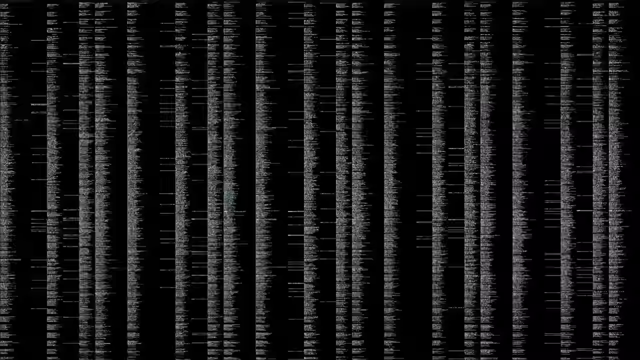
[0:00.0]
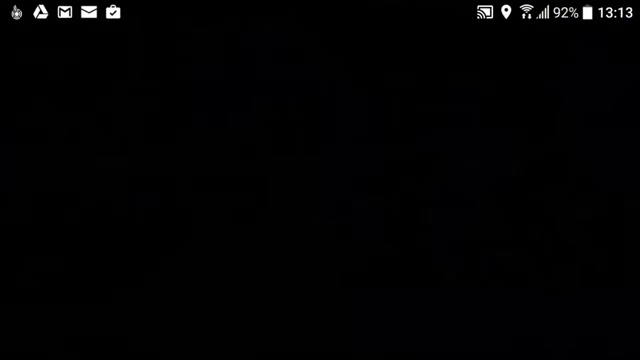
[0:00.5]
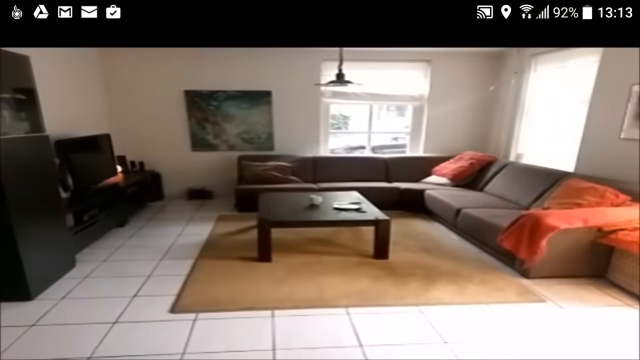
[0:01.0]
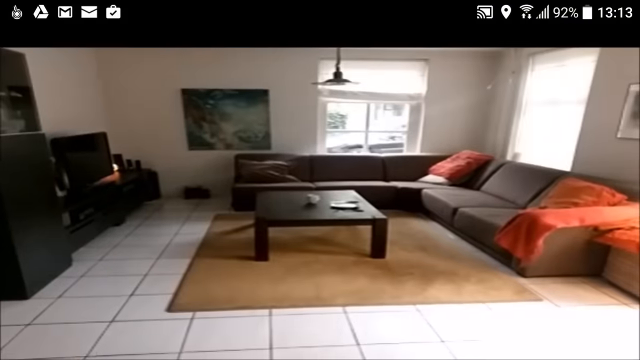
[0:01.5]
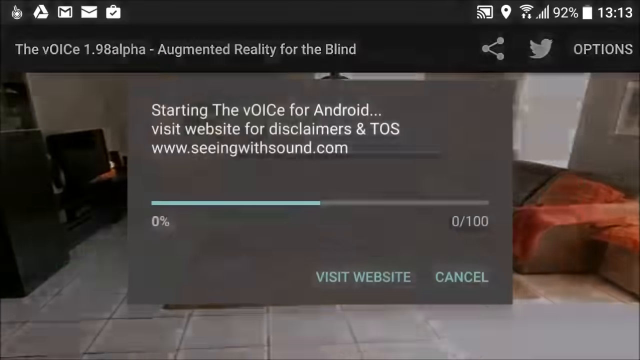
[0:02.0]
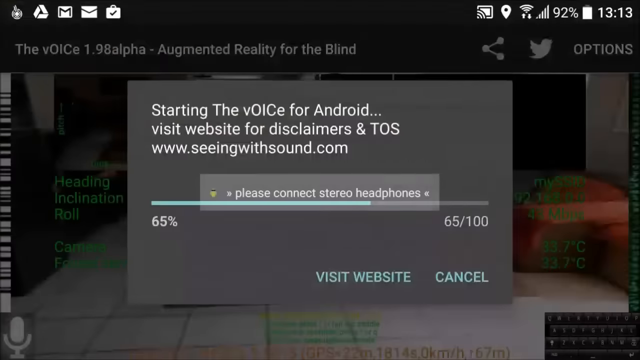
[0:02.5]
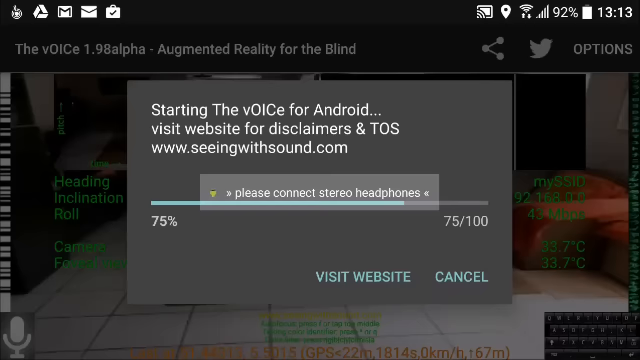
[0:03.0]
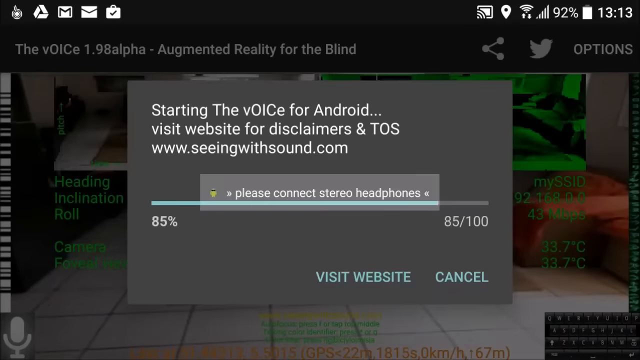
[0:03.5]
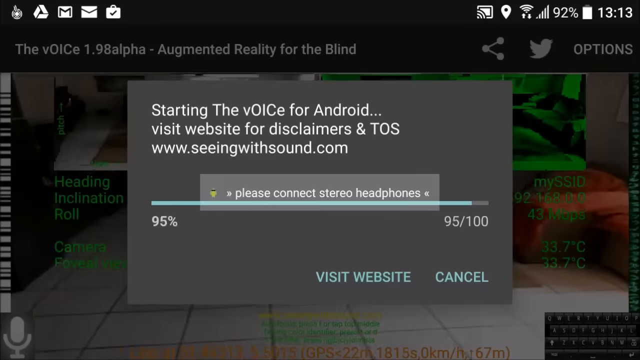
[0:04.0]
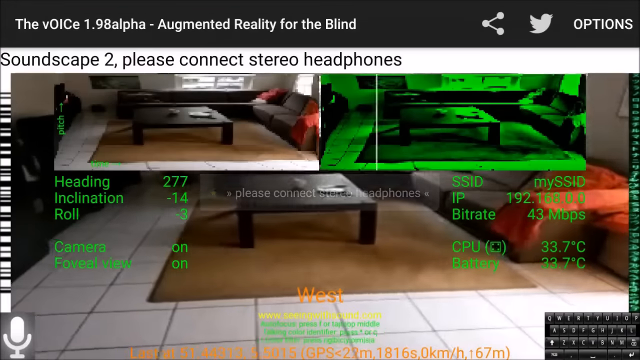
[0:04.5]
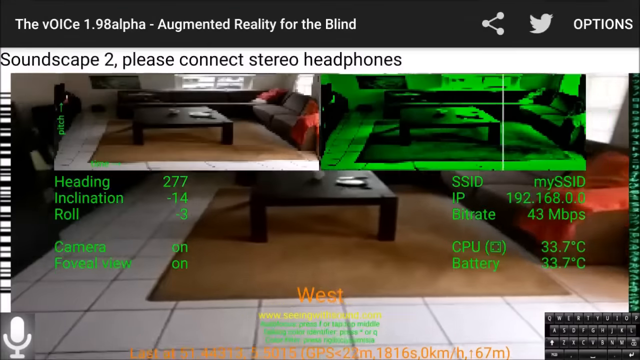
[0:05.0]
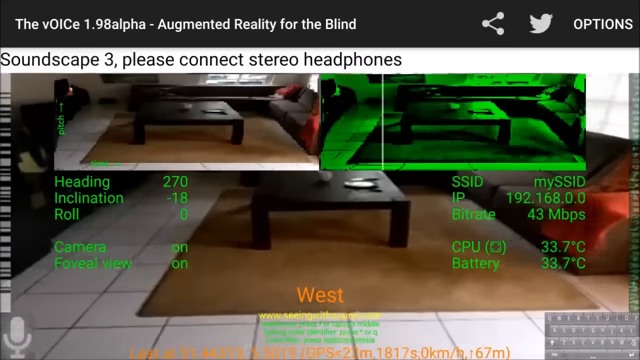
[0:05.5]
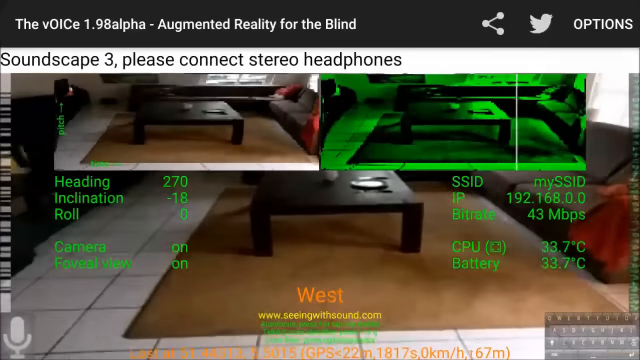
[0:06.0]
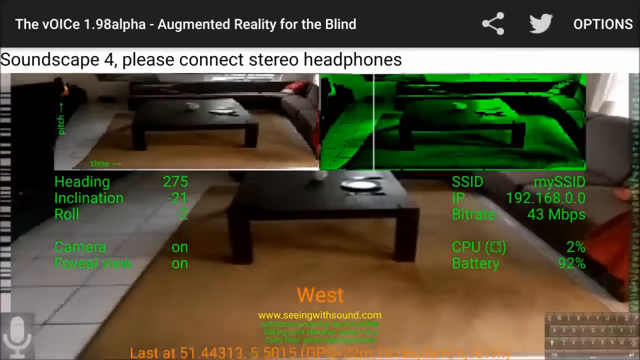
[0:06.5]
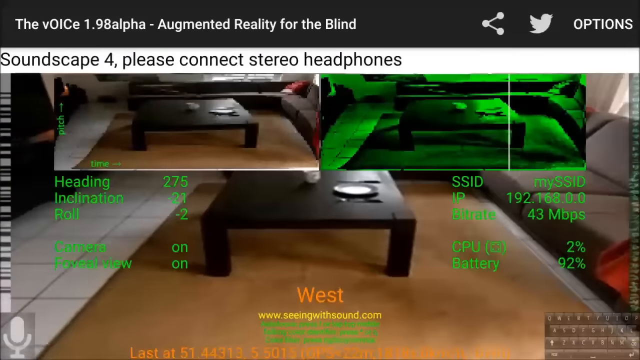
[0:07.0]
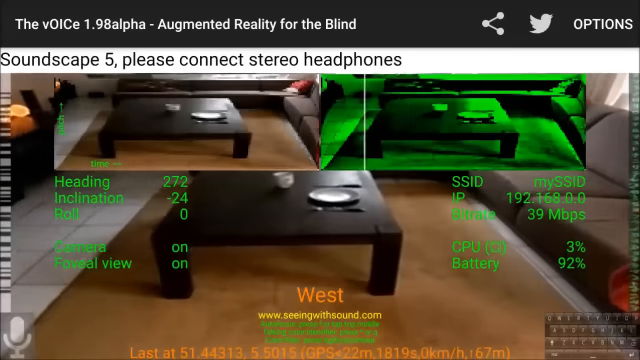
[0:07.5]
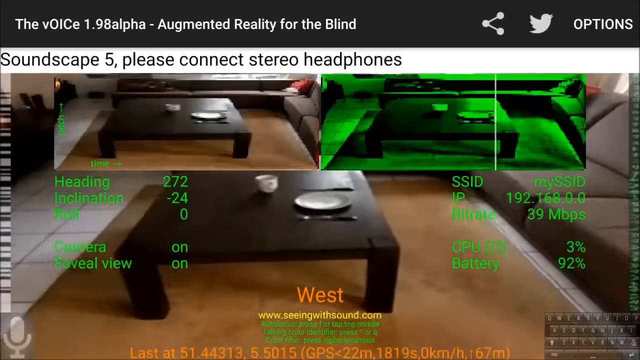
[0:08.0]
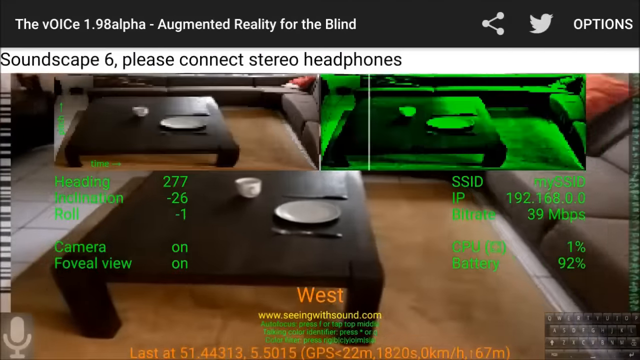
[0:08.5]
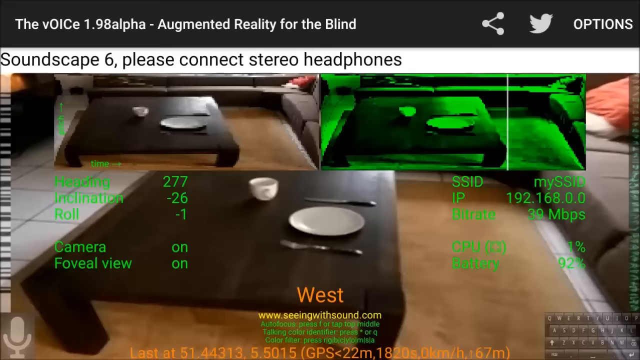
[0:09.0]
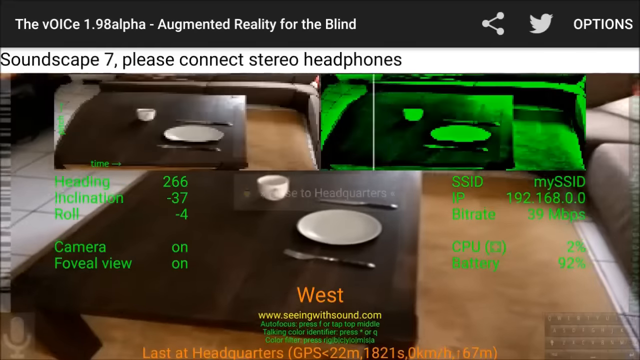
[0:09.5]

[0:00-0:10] A video plays from a phone recording; the status bar shows it is around 1:30 pm with 19% battery. The footage appears to be of a living room with brown furniture. A loading pop-up appears reading "starting the voice for Android, visit website for disclaimers in TOS, www.seeingwithsound.com" and asks to "please connect stereo headphones." Once the pop-up disappears, data and information about the camera are overlaid on the living room footage, along with overlaid images of the living room and of the living room with a green overlay. The scene is being scanned as the person holding the camera moves toward the table in the living room.